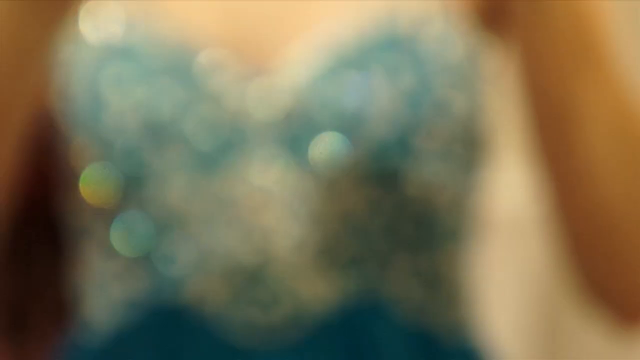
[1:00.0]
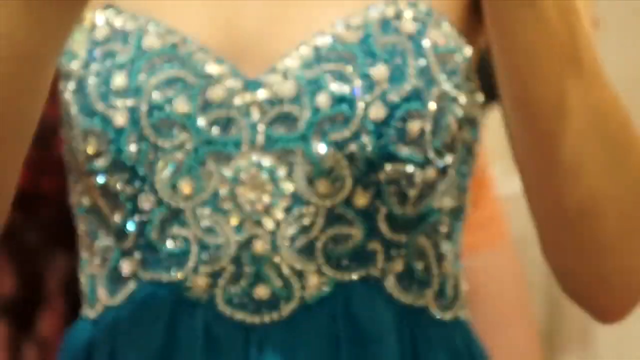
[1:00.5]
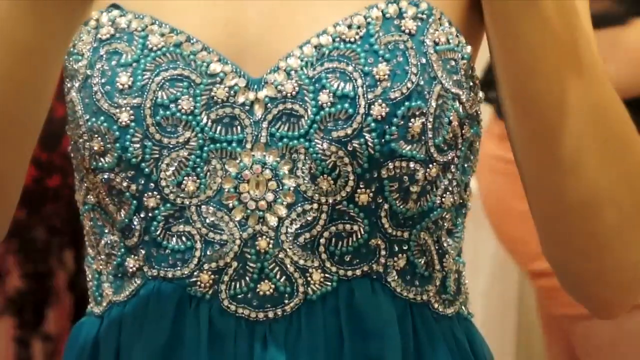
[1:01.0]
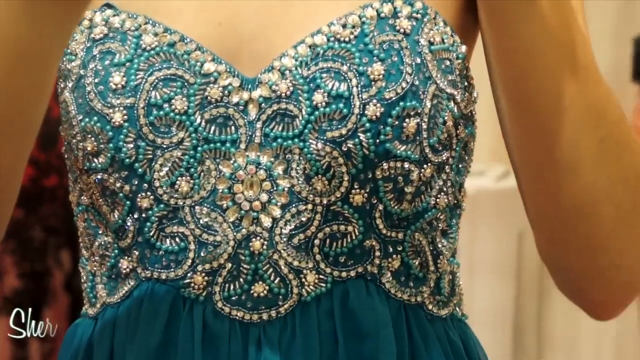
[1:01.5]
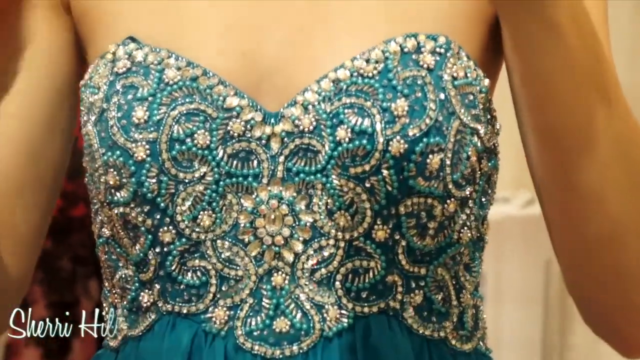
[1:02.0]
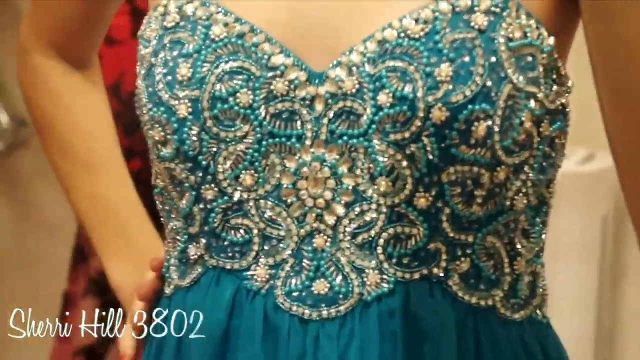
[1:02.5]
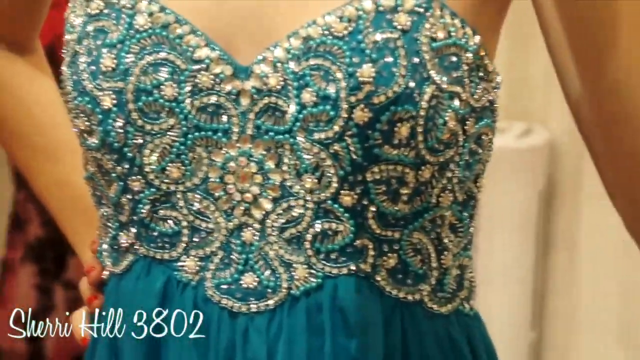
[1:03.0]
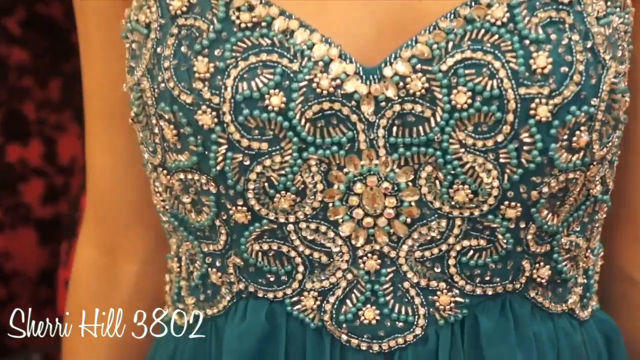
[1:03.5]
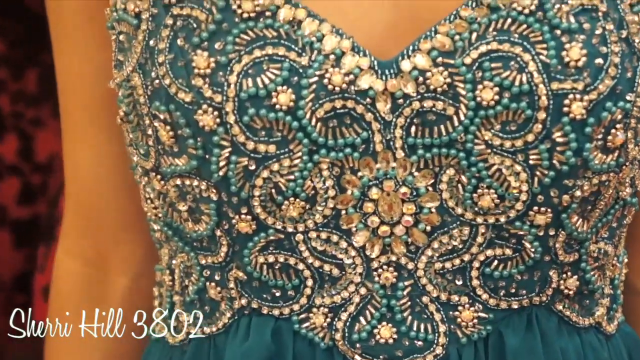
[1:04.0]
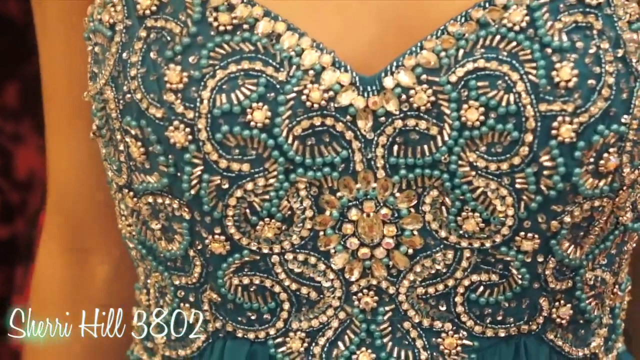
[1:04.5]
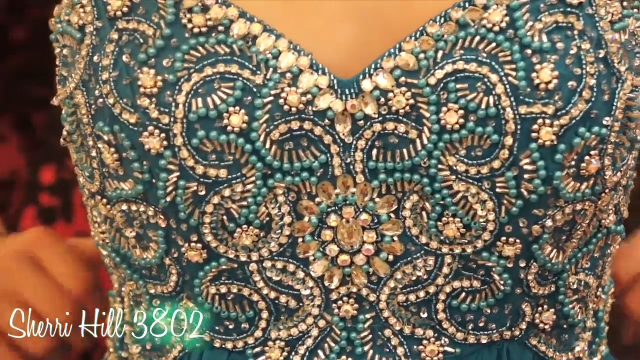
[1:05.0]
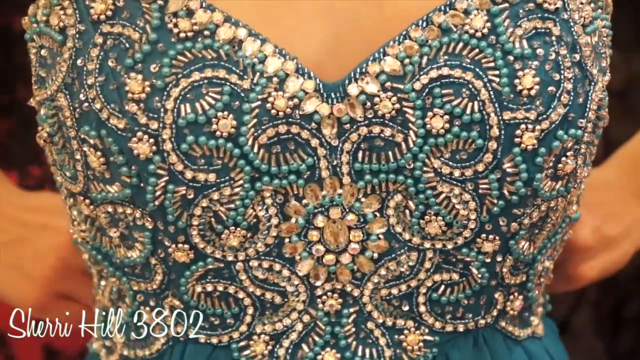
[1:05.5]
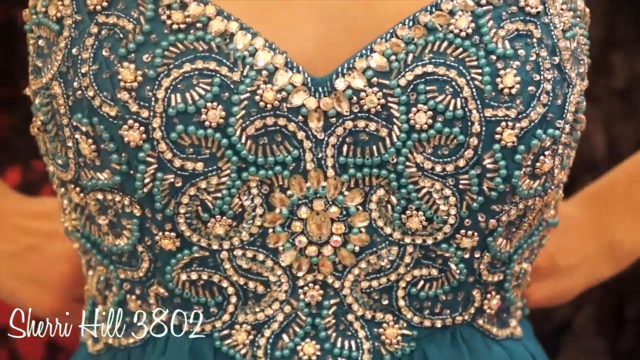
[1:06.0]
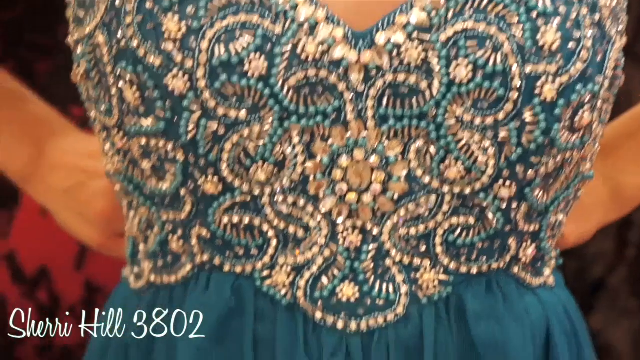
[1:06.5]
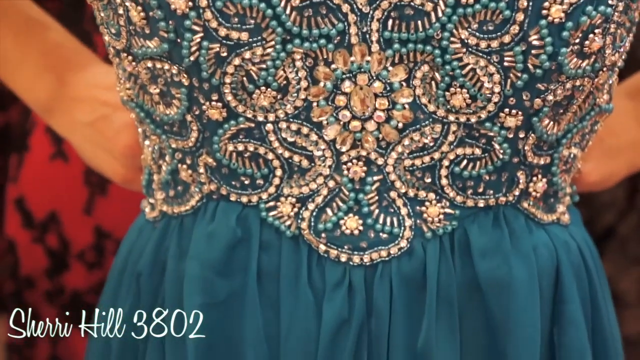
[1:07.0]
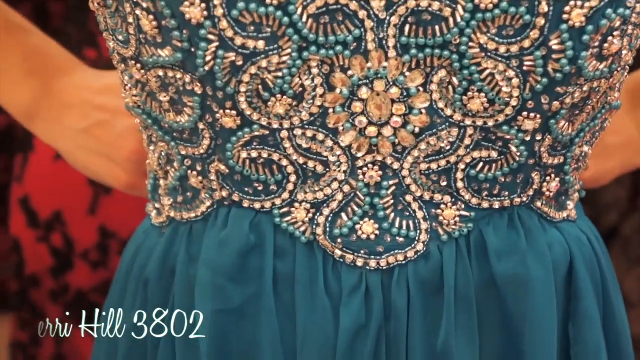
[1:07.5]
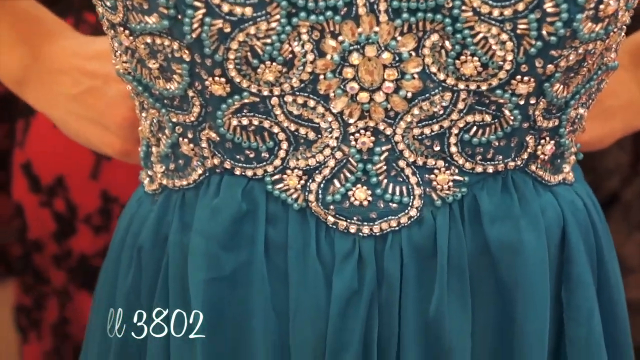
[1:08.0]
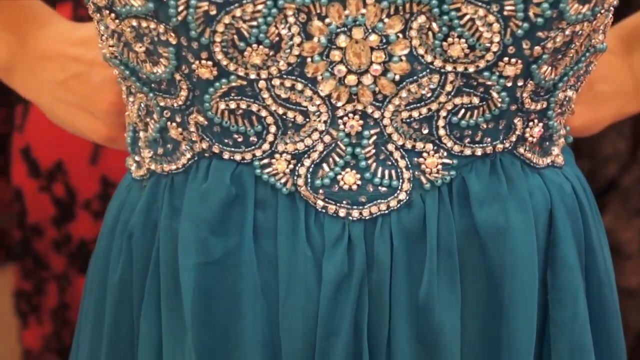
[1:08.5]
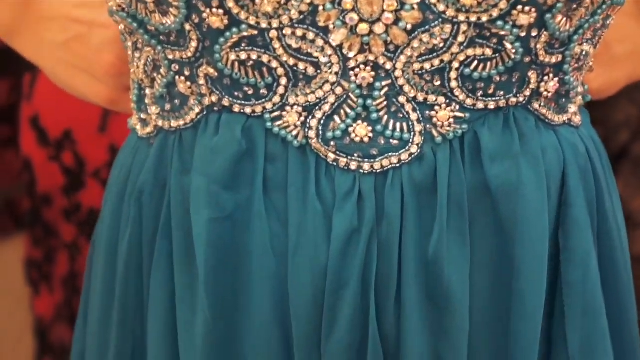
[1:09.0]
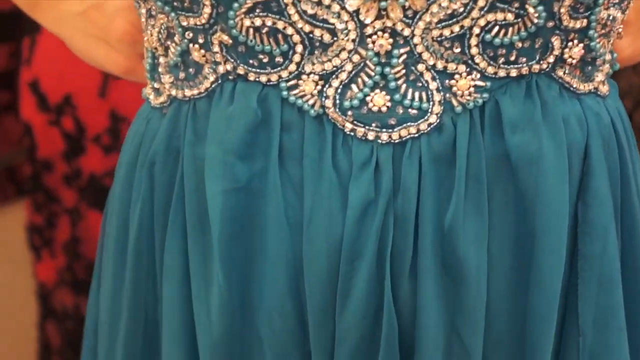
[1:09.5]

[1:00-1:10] The lady in the blue dress with sequins is shown from the waist up. The shot starts out blurry and then comes into focus in a close-up. The top is almost like a brassiere, with all kinds of patterns in greens and whites, some white pearls, and designs with something almost like a brooch in the center. Text reads "Sherry Hill 3802" for this dress, which is more of a teal blue color. The ladies are white. Someone in orange pants and a black top walks behind the camera.